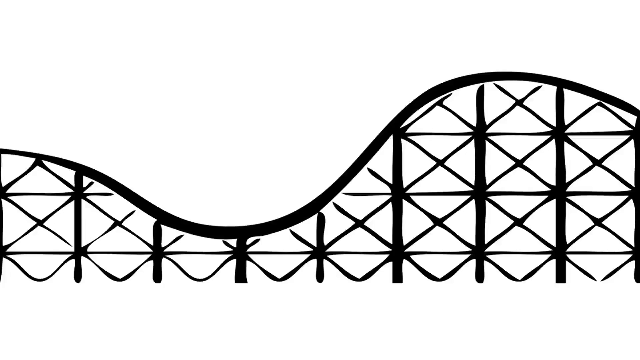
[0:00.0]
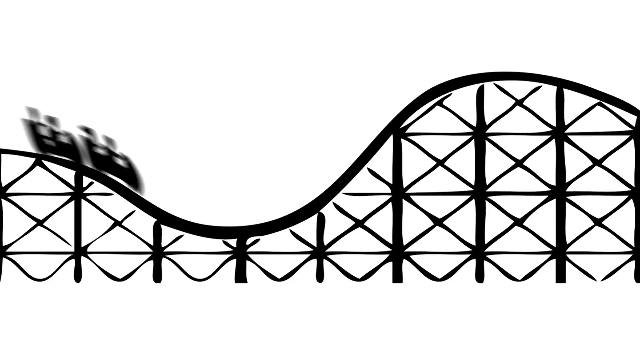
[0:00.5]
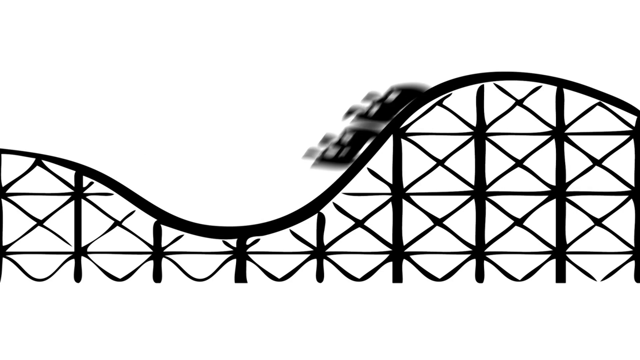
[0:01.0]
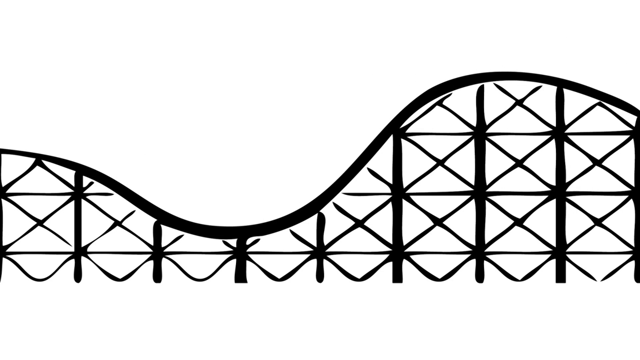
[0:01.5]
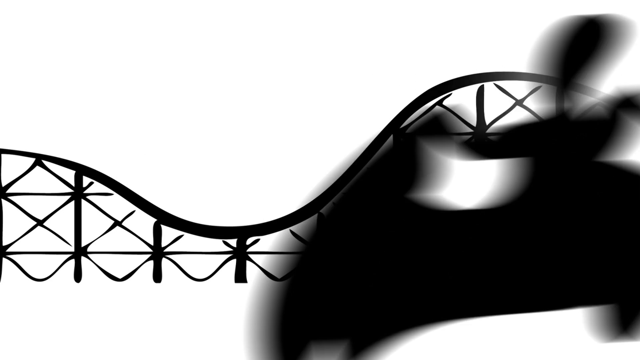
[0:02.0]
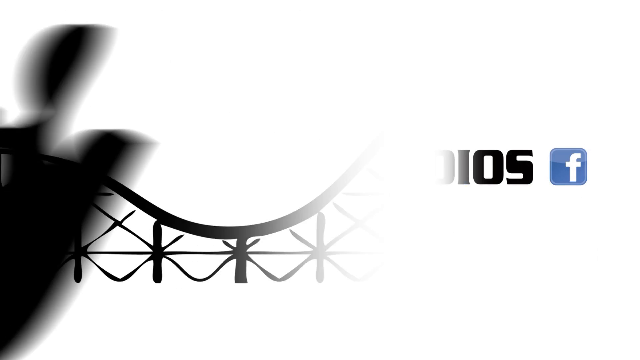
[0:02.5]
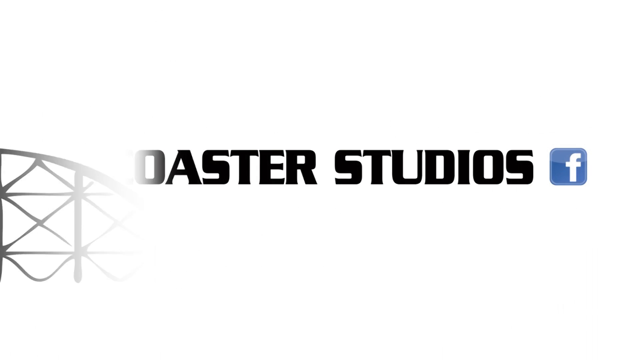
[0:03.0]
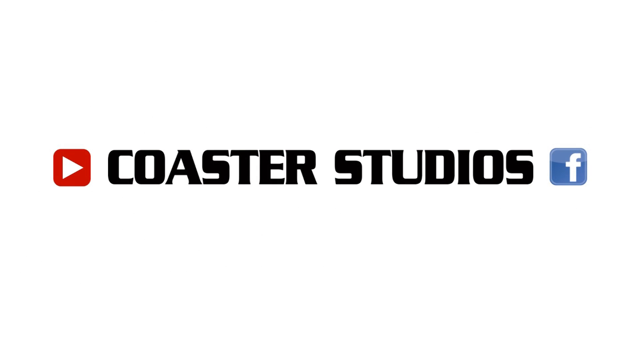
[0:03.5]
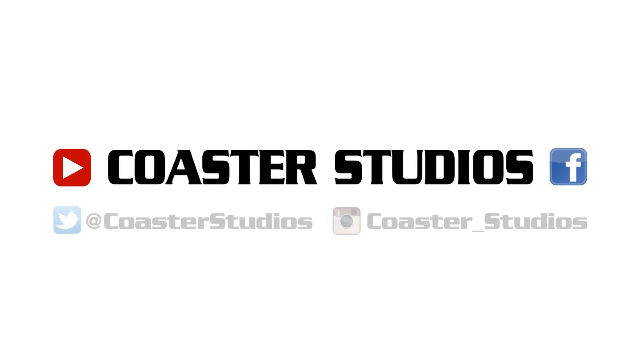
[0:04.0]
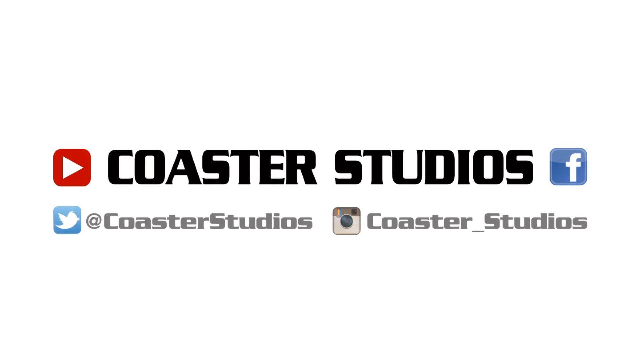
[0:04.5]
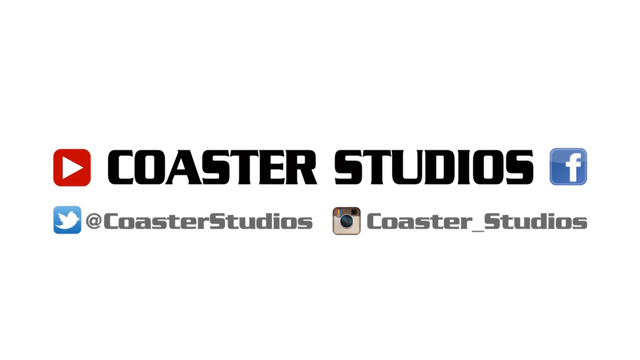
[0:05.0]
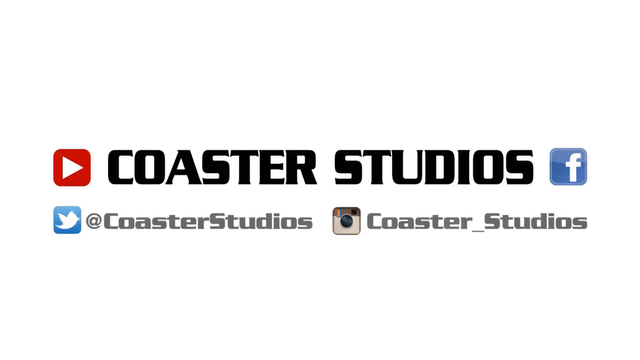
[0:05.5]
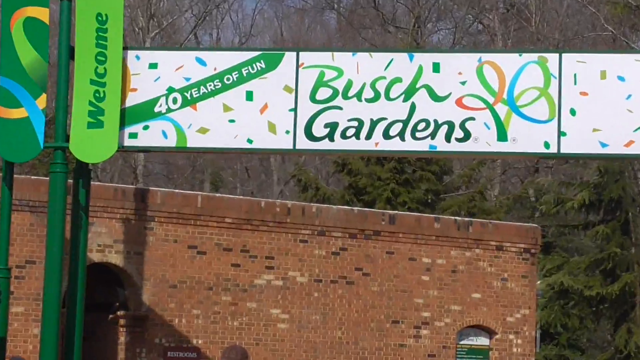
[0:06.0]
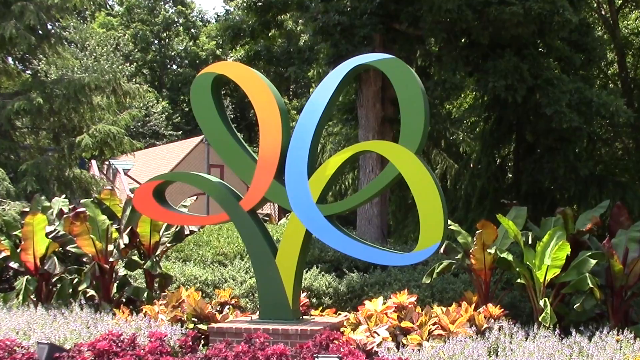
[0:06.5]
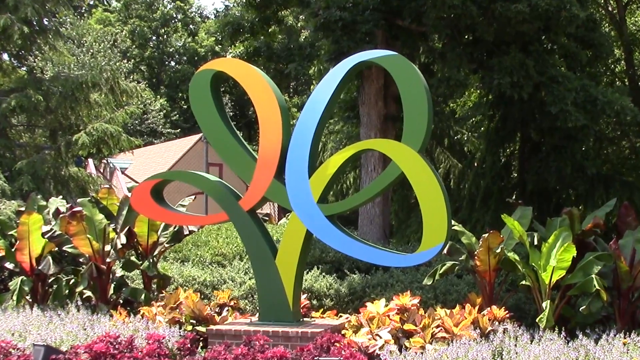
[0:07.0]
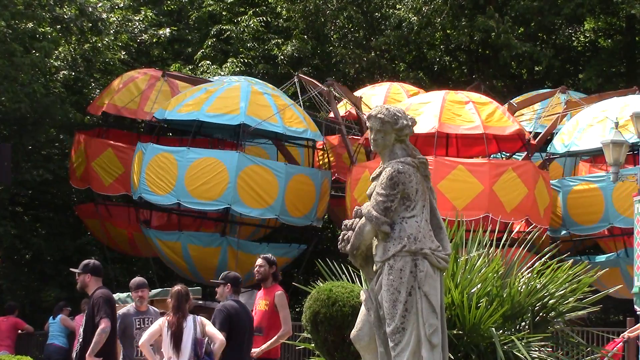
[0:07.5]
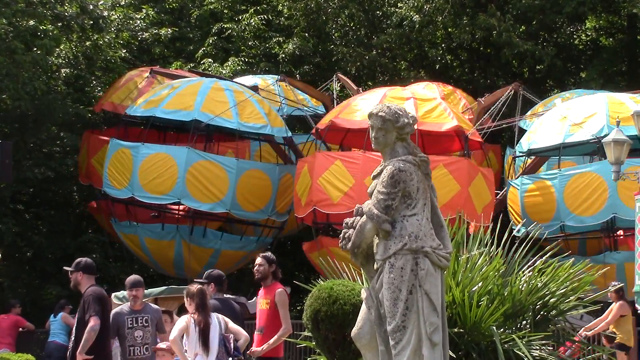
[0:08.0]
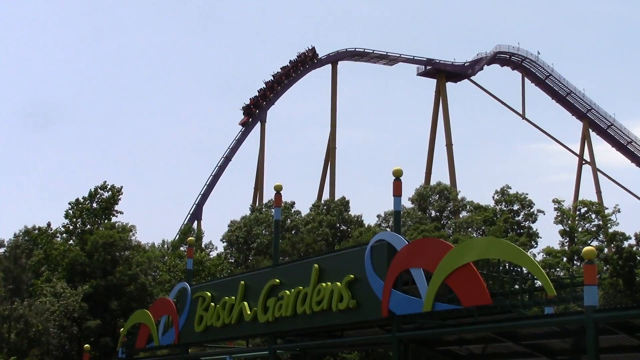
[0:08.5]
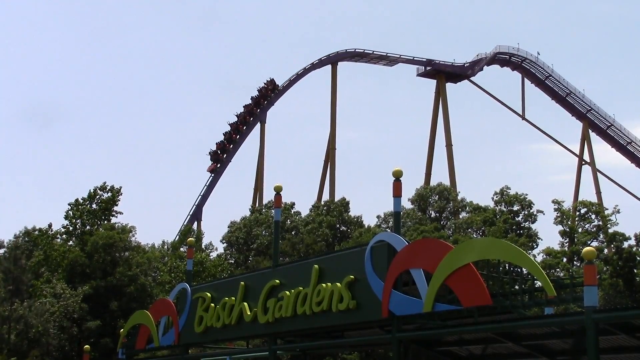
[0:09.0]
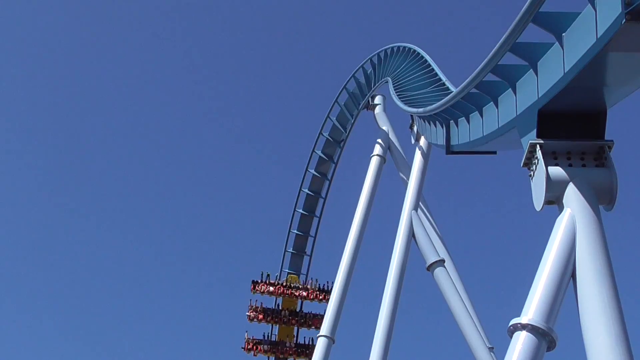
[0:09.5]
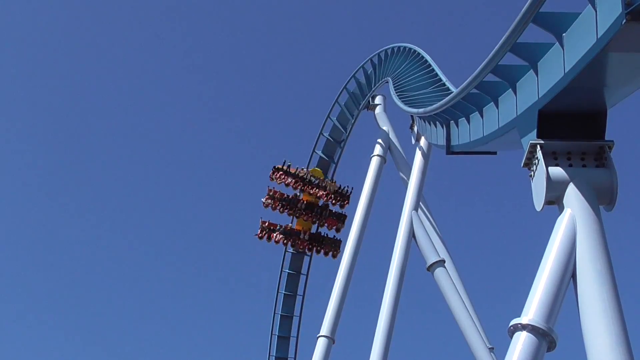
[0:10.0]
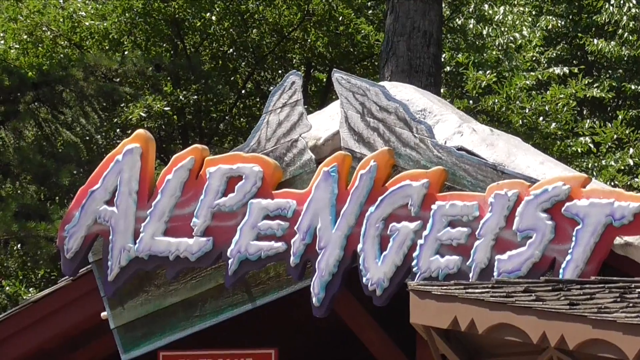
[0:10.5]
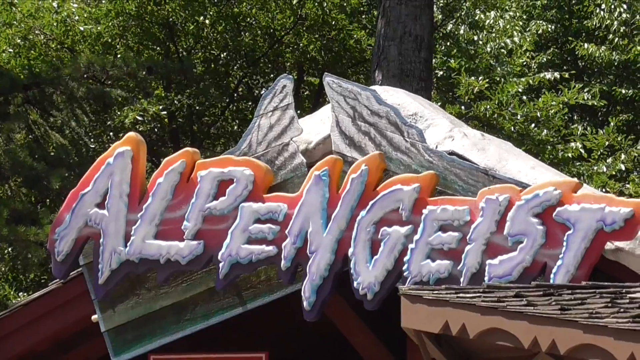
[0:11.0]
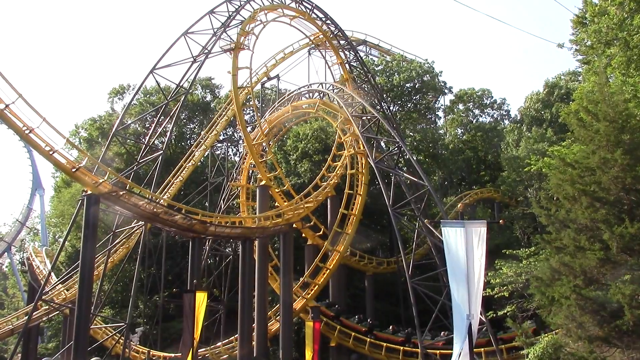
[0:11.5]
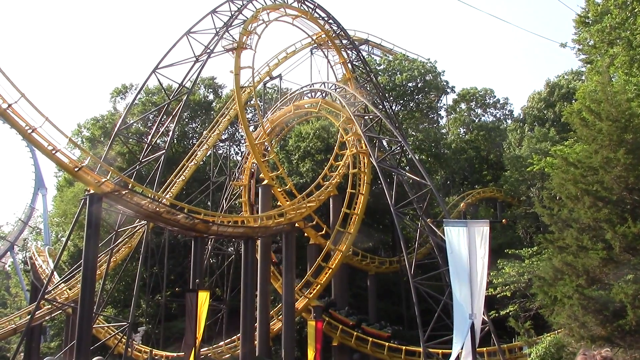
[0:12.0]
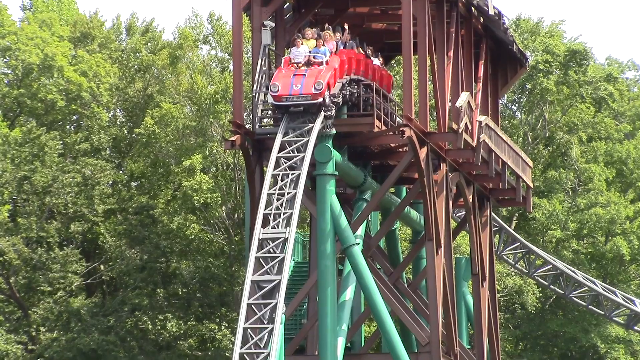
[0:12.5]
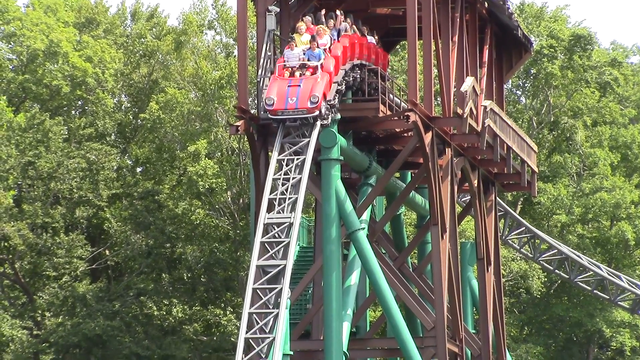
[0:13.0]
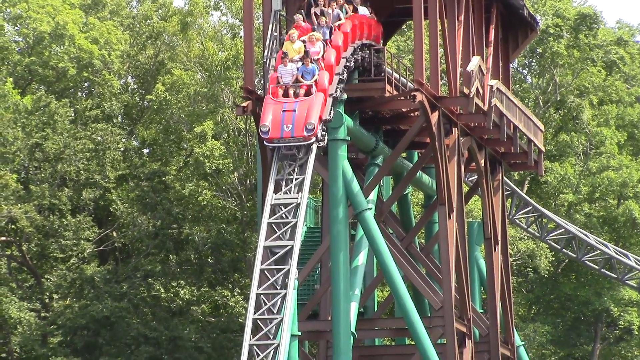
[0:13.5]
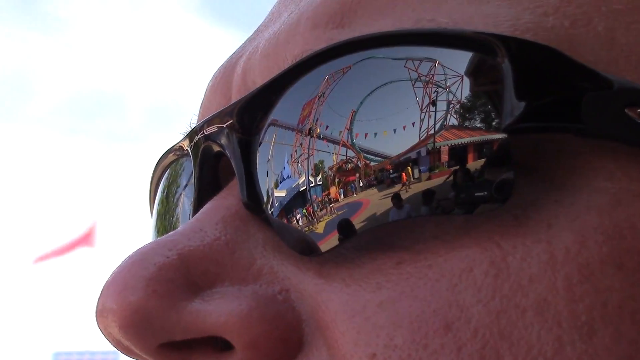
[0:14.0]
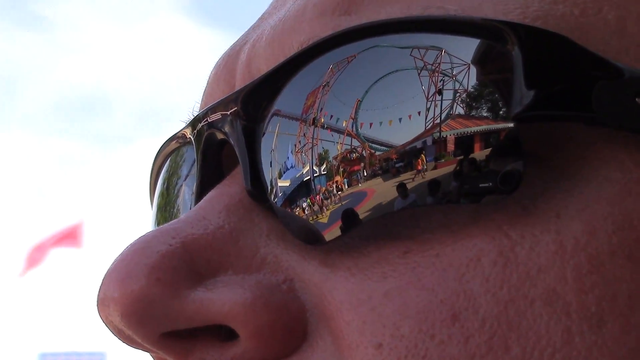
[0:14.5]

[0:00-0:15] A quick-cut montage shows four different roller coasters at Busch Gardens in action, with each shot lasting no more than two or three seconds. People ride the coasters and stand in line. A close-up shows a man wearing sunglasses, with one of the roller coaster tracks seemingly visible in the reflection of his sunglasses. A sign at the beginning reads "Busch Gardens," and the amusement park is filmed during the daytime.